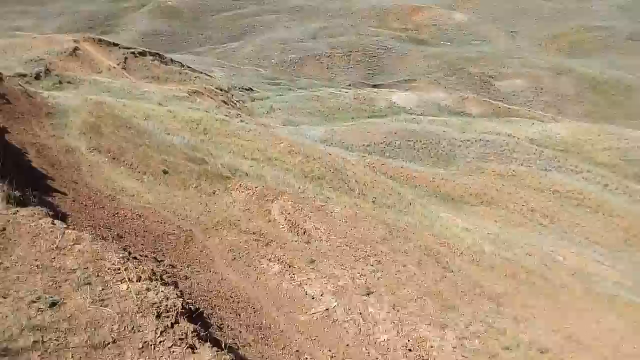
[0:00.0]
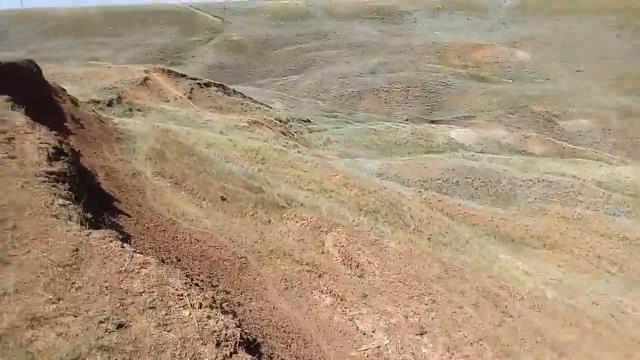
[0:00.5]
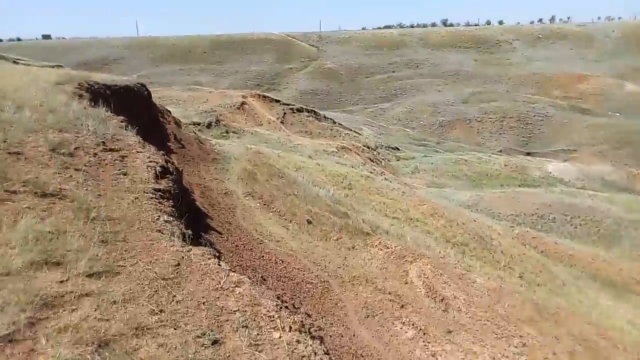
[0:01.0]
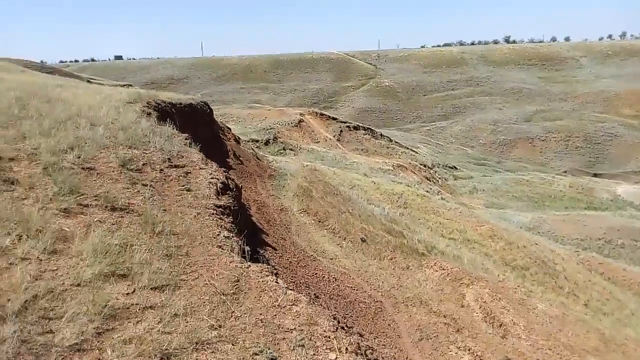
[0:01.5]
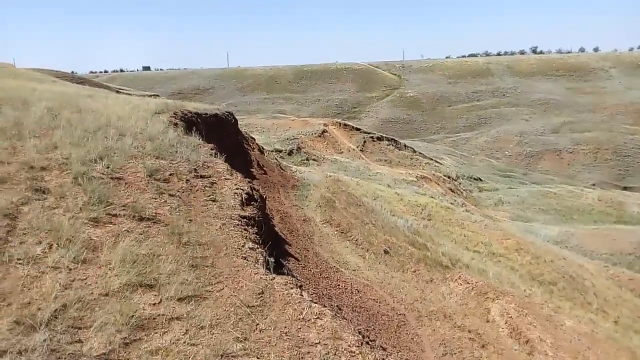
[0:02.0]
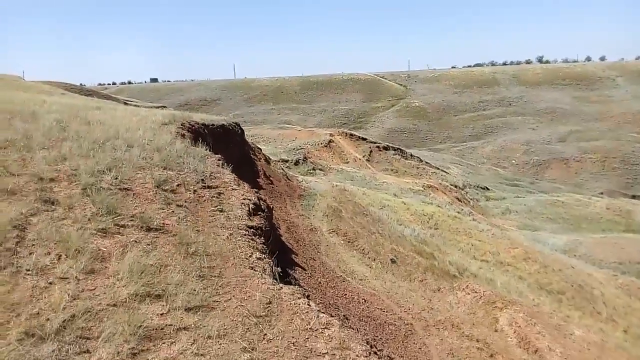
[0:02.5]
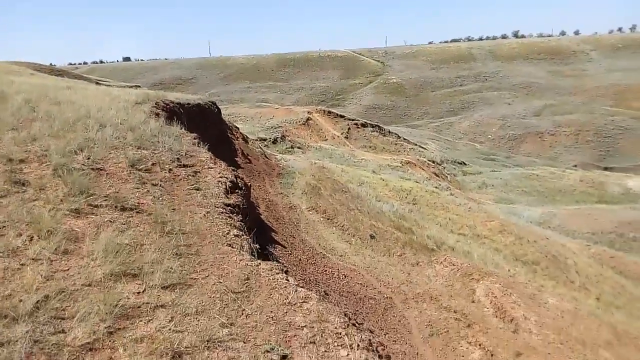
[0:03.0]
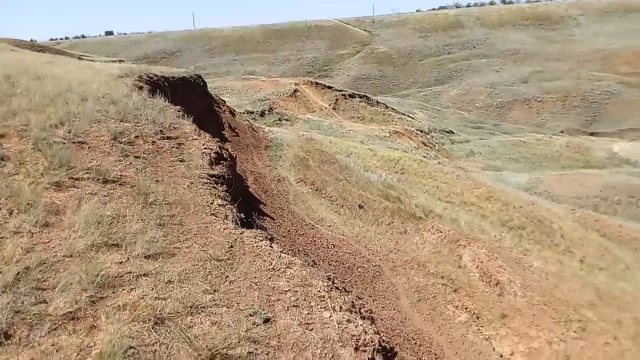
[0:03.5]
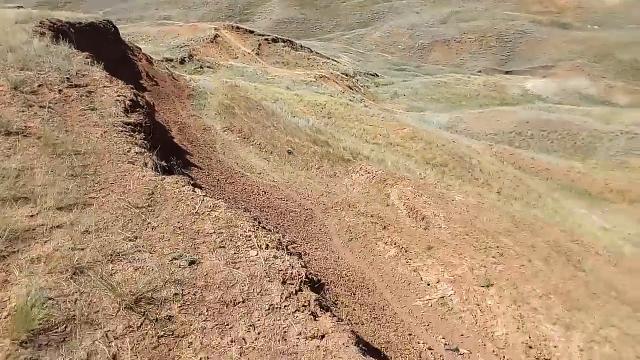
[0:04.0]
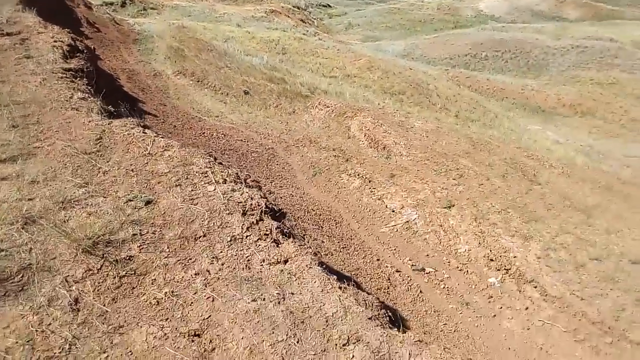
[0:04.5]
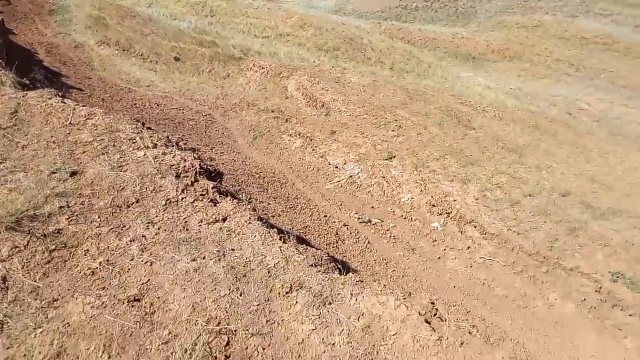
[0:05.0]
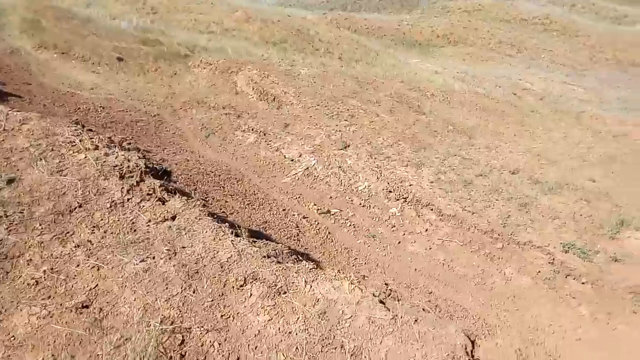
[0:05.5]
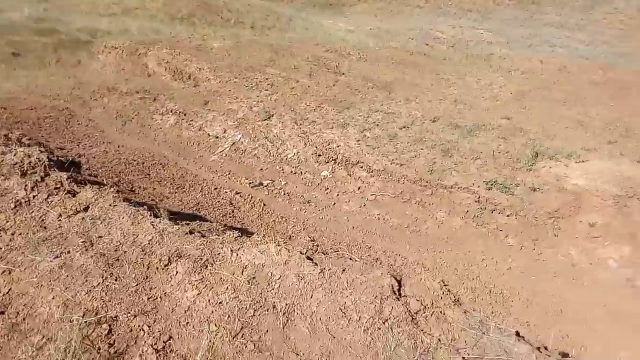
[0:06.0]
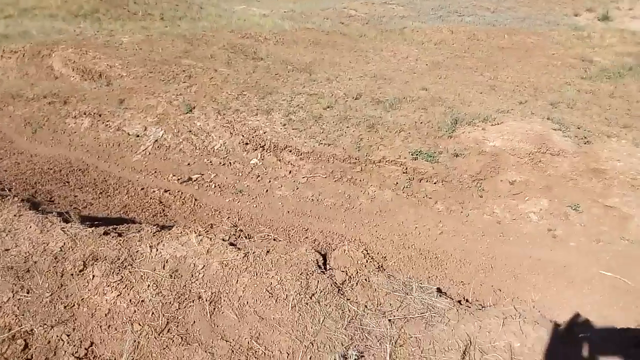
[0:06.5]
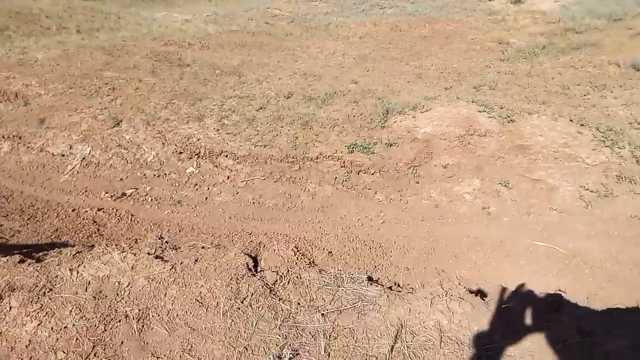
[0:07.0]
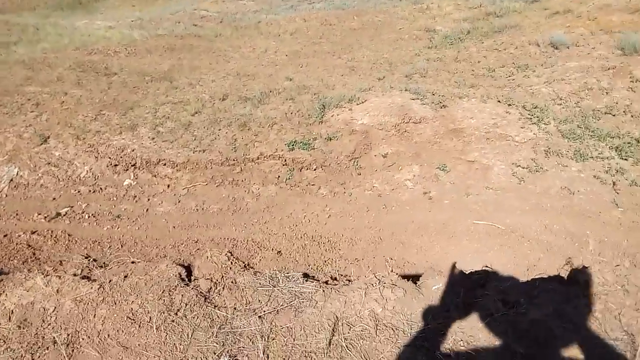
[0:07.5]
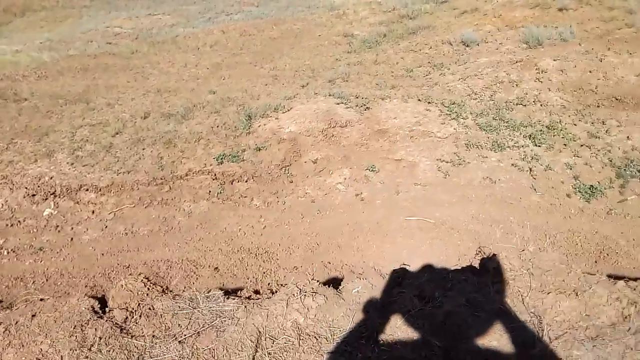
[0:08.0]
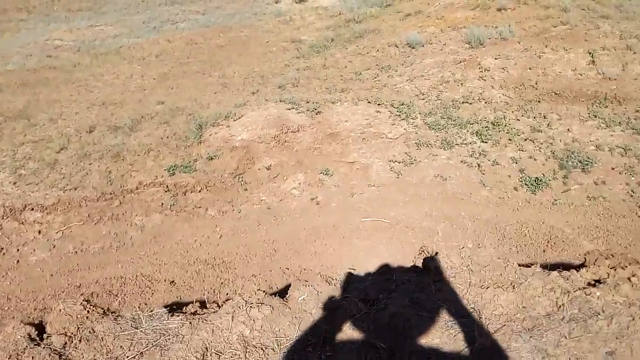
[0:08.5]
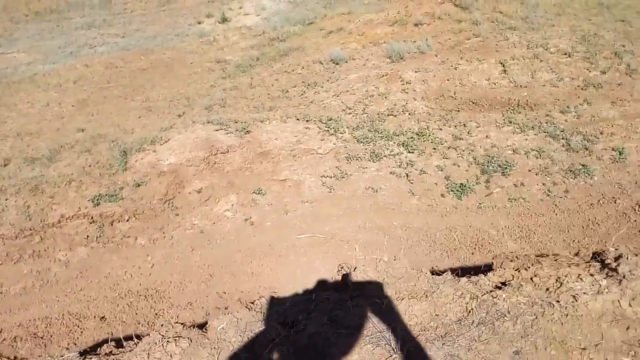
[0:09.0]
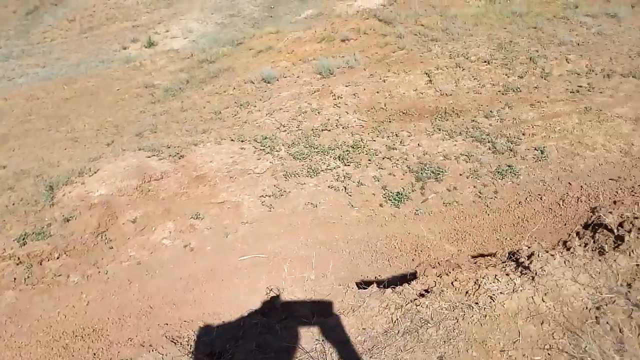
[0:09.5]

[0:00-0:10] The video opens on what looks like a desert. The shadow of someone who may be filming is visible; it is unclear whether it is a man or a woman, and the shadow seems to be holding something up in its hands. The area appears to be desert or ground filled with rocks and sand, with very little vegetation, or possibly a prairie stretching for miles. It looks like it could be either spring or fall.